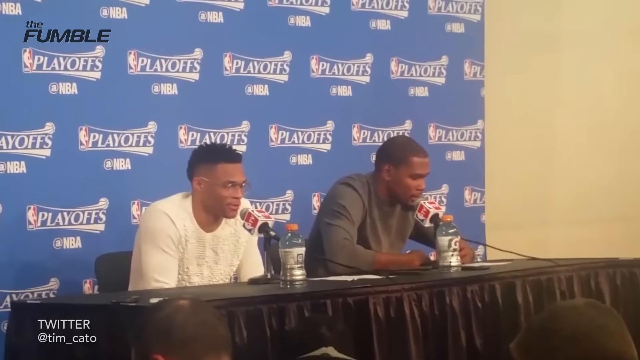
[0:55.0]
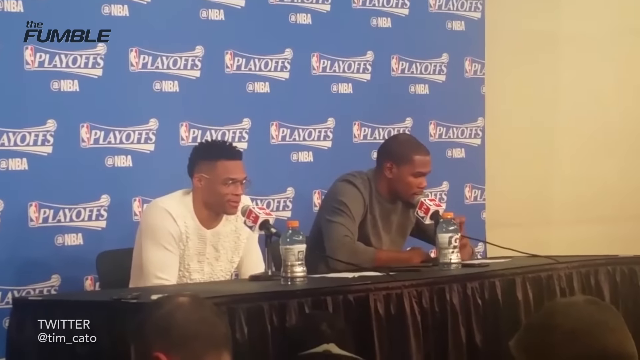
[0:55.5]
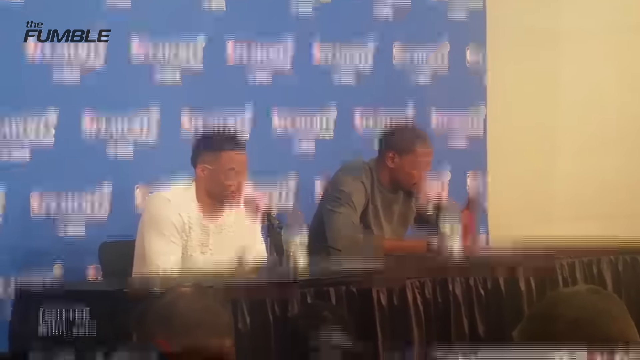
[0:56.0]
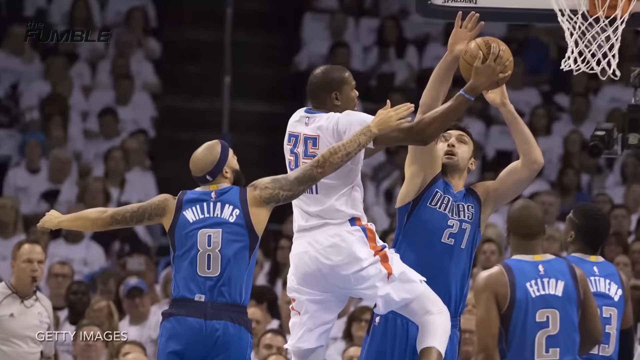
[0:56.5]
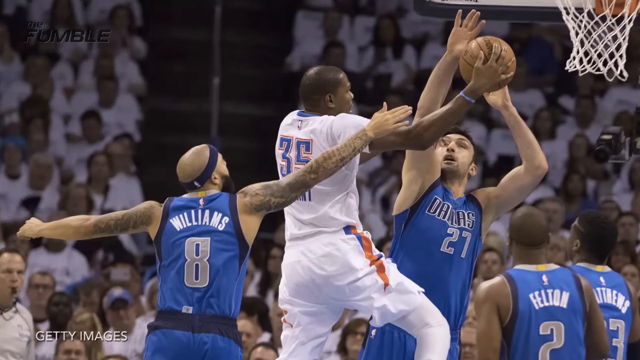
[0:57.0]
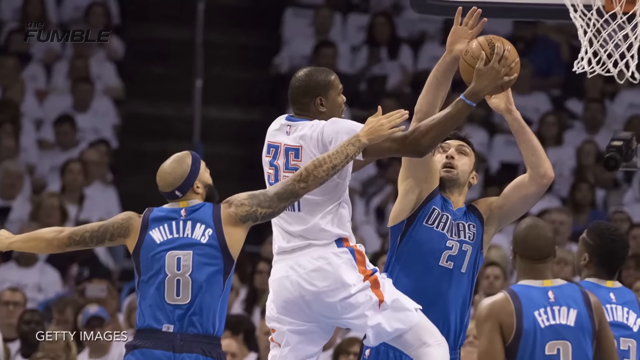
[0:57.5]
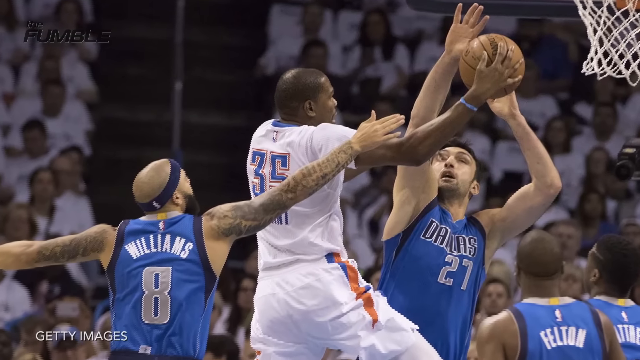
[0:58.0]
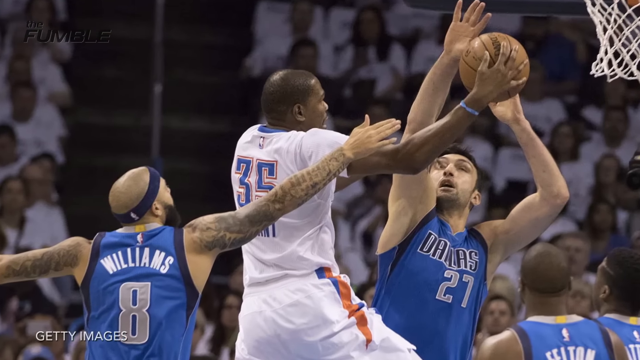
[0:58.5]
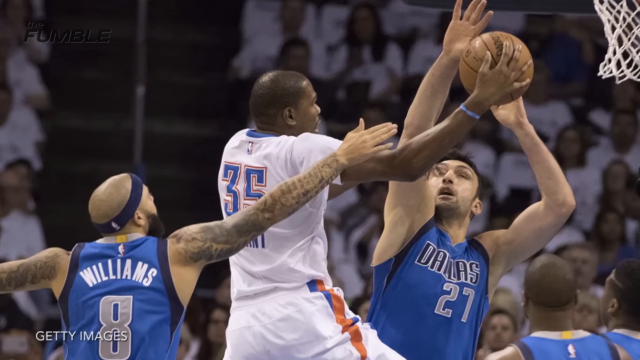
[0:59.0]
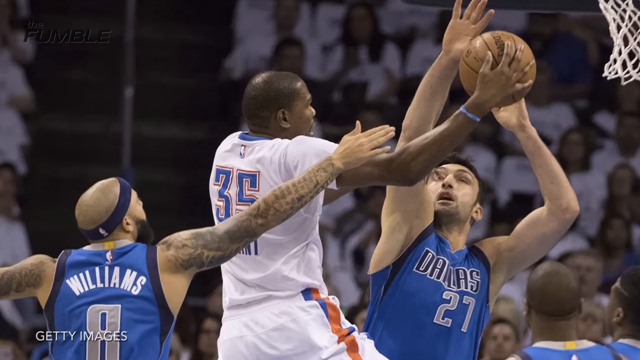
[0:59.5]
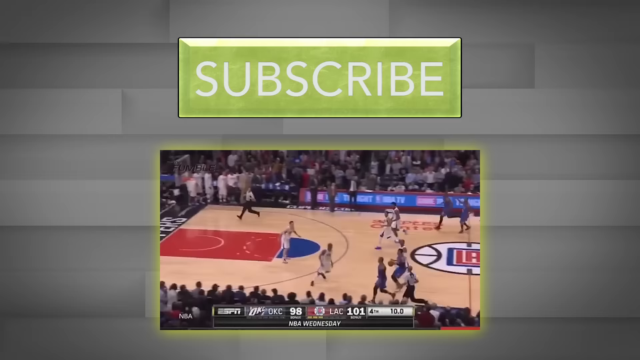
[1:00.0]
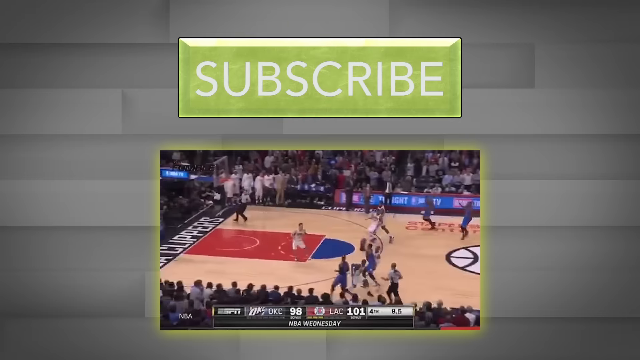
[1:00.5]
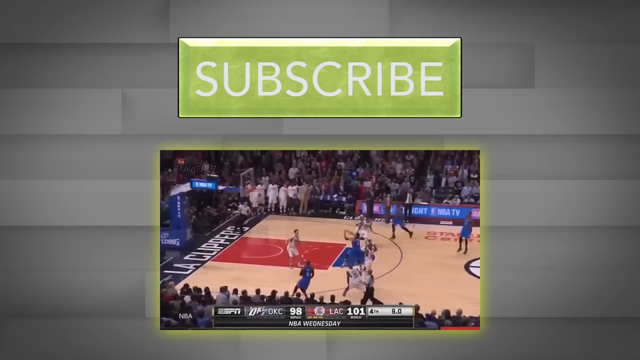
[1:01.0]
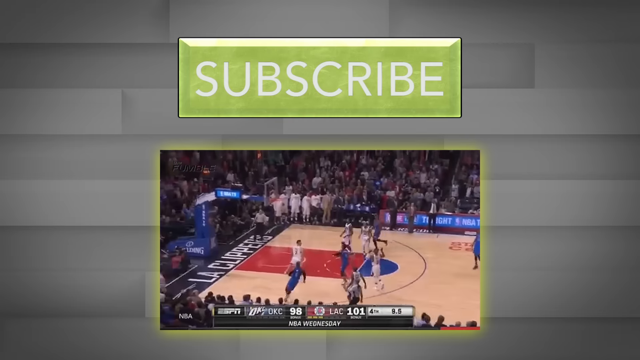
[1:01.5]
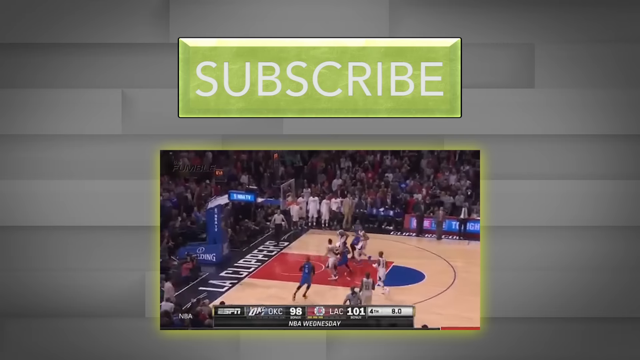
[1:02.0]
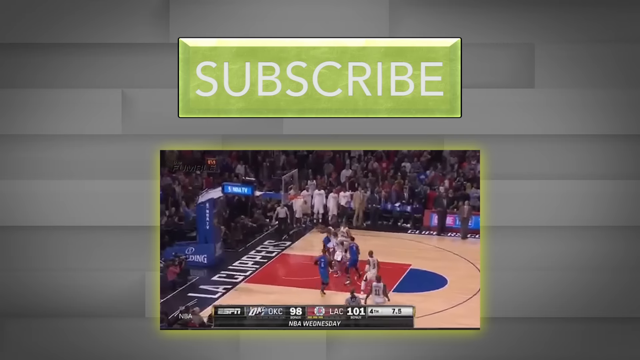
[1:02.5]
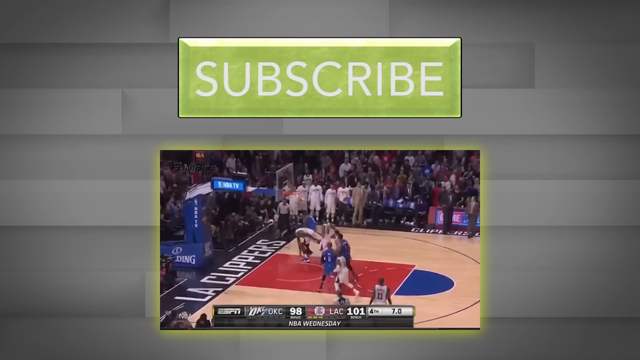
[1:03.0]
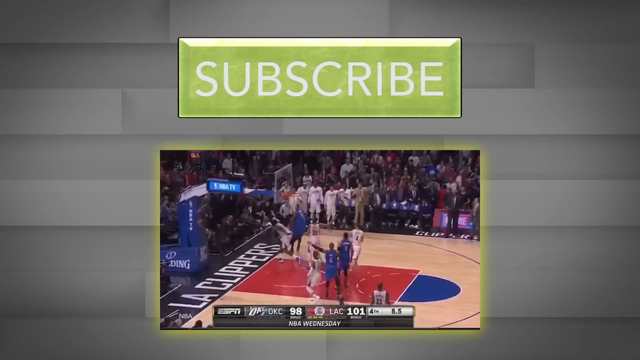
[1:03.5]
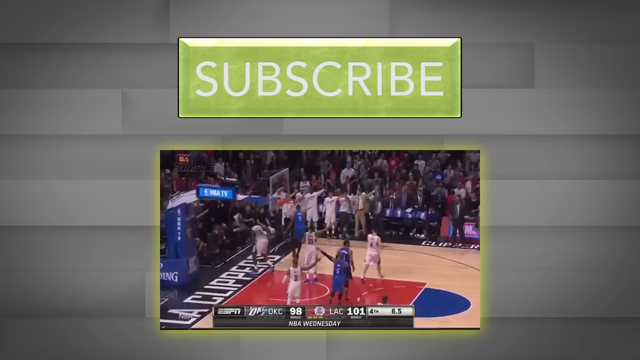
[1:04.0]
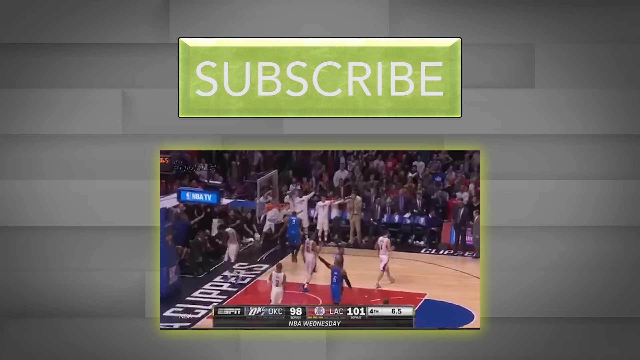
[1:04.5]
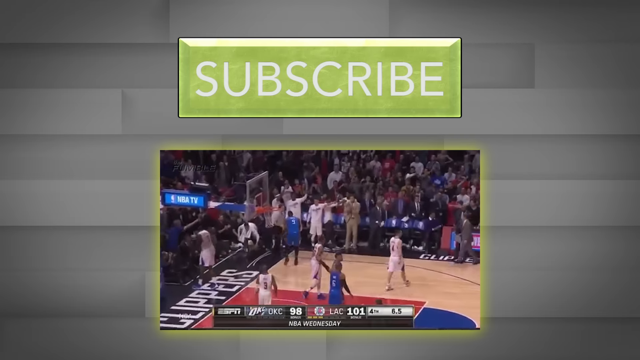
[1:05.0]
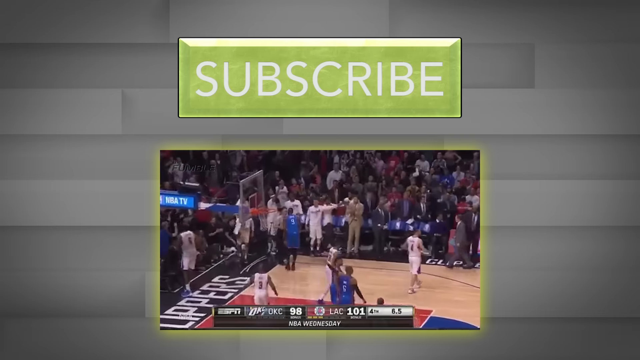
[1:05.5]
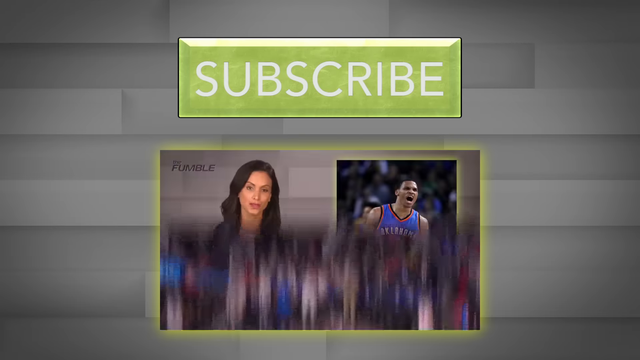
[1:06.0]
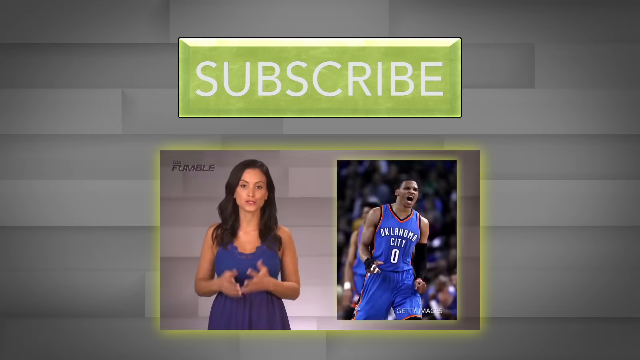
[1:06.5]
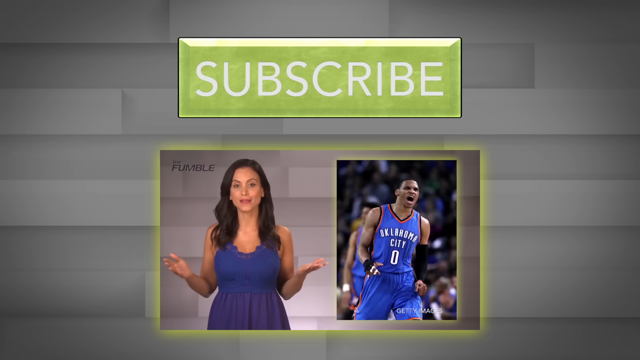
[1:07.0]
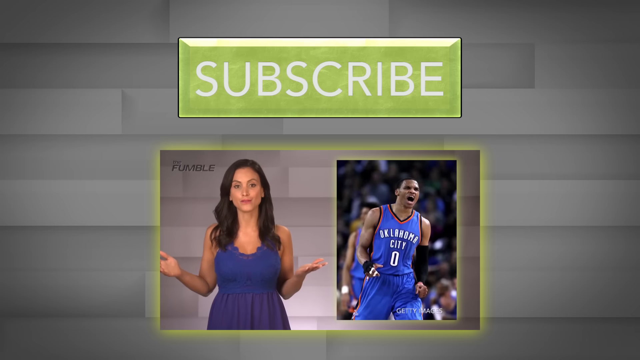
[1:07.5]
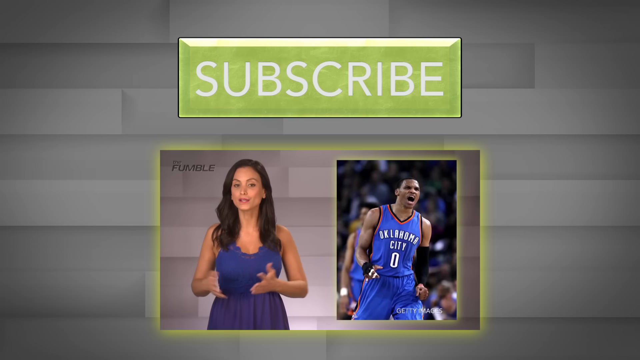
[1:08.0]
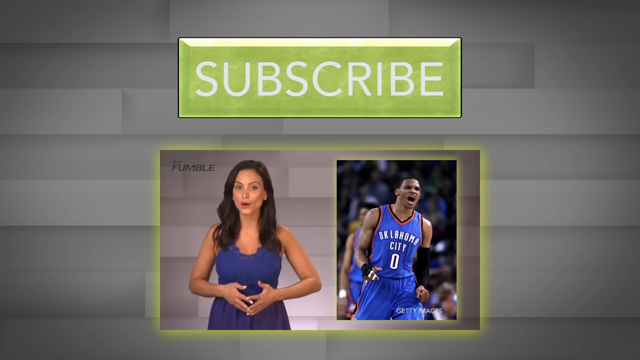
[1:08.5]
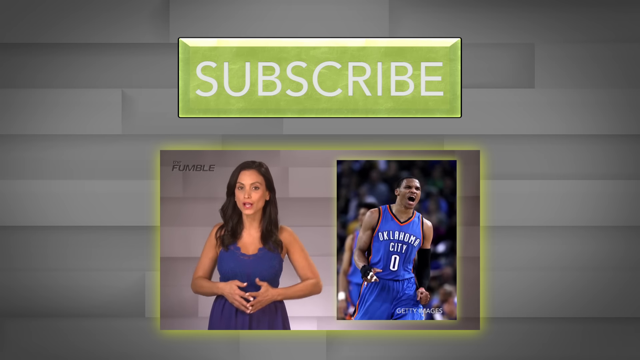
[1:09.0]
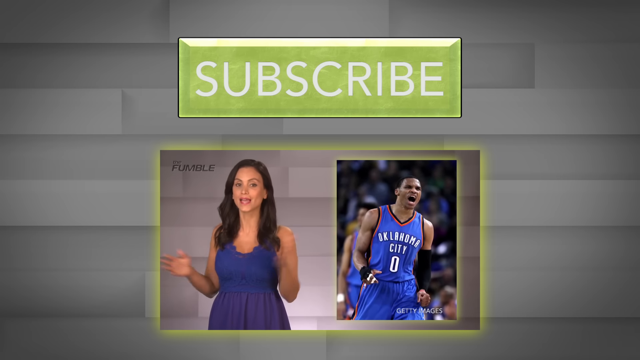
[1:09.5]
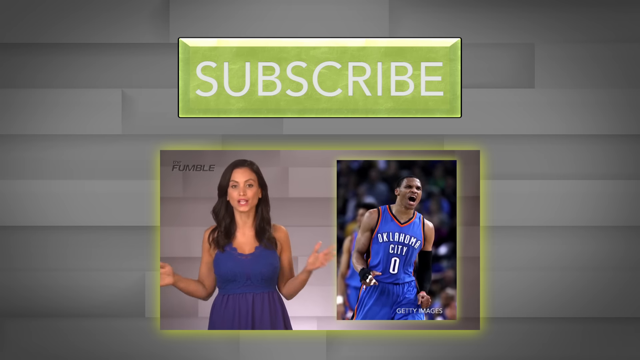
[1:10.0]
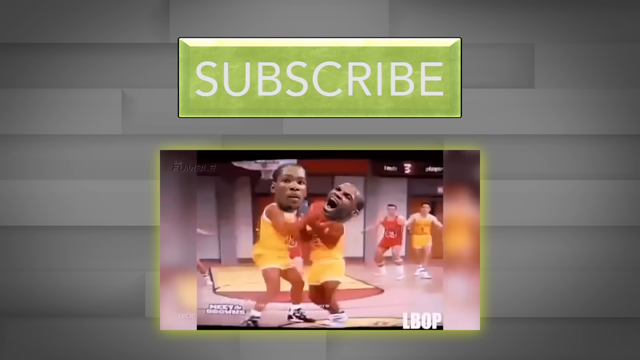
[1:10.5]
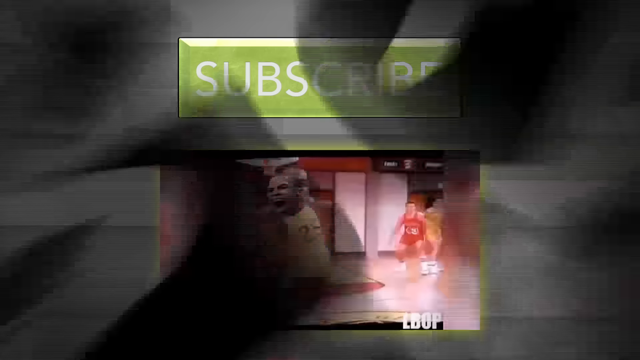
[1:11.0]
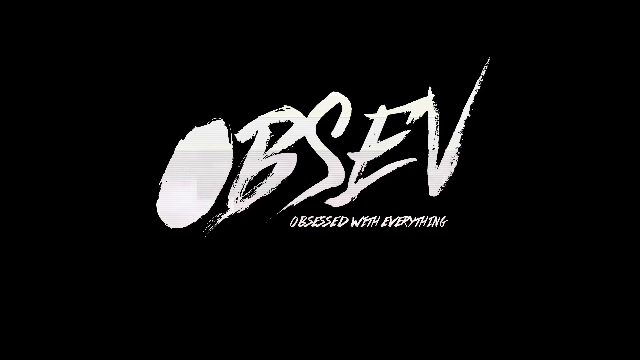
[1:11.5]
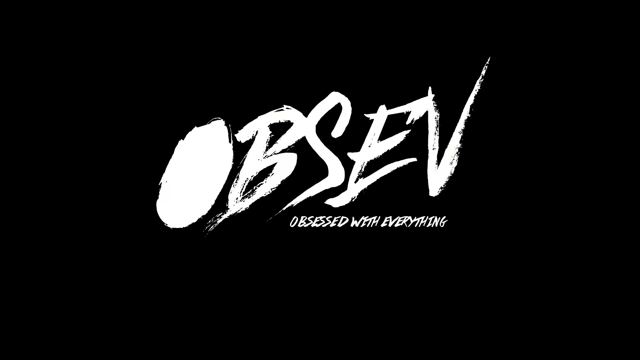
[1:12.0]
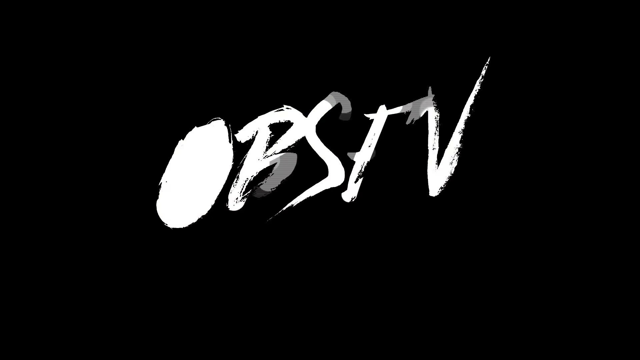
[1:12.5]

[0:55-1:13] After the press conference, the video switches to live-action footage of the game, in which the blue team appears to score. The female commentator appears, alongside a clip of a player. Live action shots and still shots are interspersed with the commentator, who appears next to a clip of a man from Oklahoma City in a blue uniform. A man in what looks like a white Dallas uniform takes a shot at the basket while a player in blue tries to defend, and live action shows what looks like Oklahoma City players in blue making a play on the basket. A brief cartoon, apparently an animated interlude, shows basketball players duking it out. A subscribe button appears over one of the live action clips. At the end, on-screen text reads "obsessed with everything."